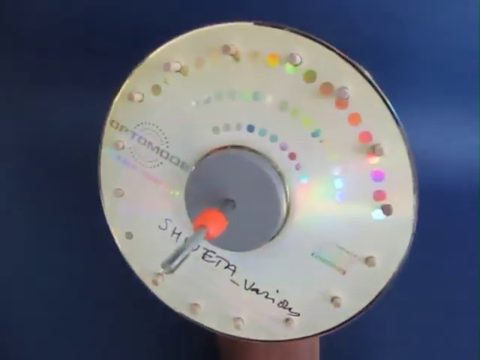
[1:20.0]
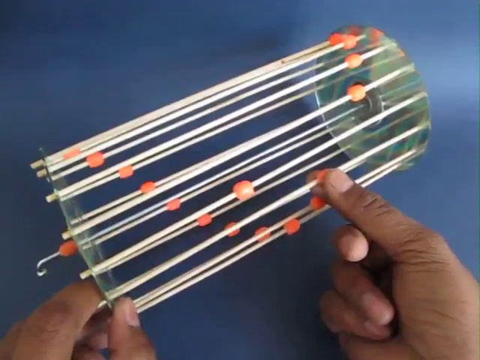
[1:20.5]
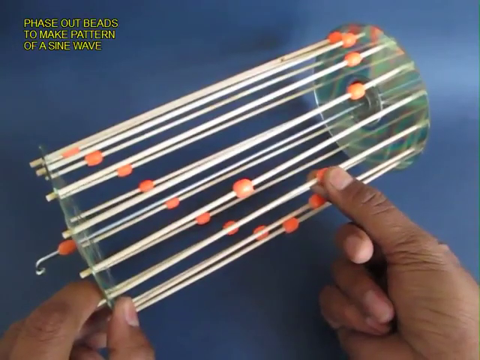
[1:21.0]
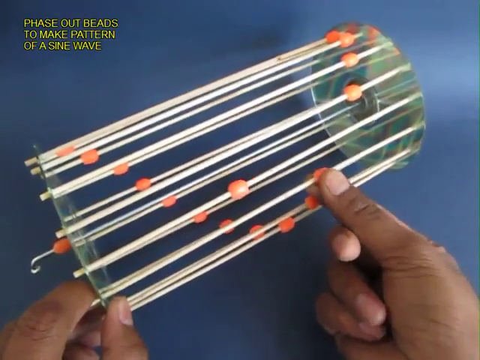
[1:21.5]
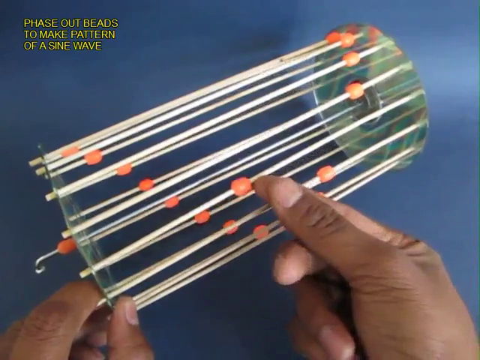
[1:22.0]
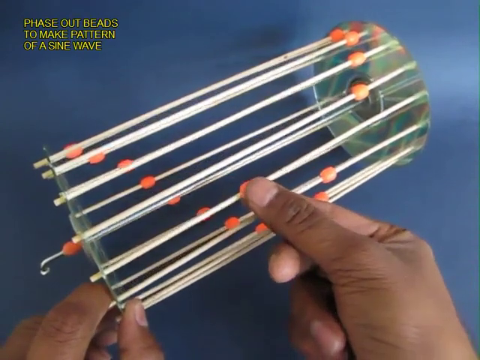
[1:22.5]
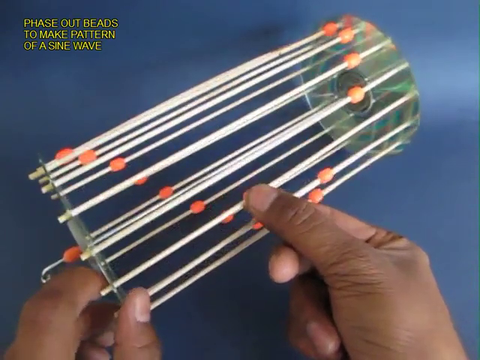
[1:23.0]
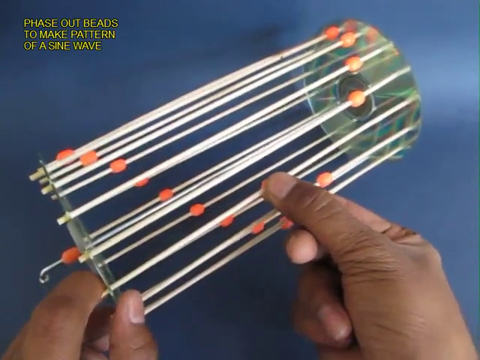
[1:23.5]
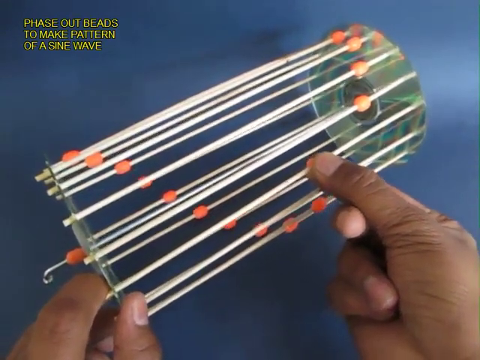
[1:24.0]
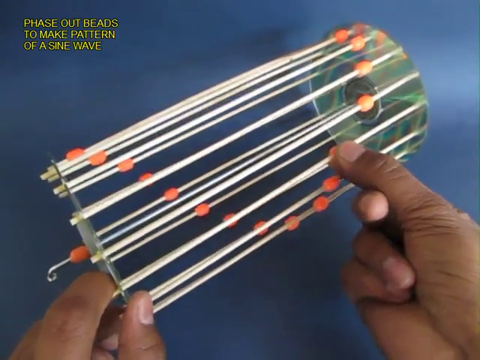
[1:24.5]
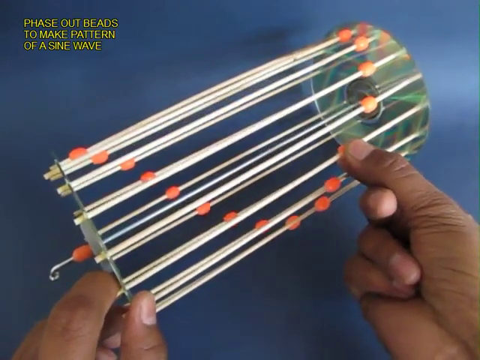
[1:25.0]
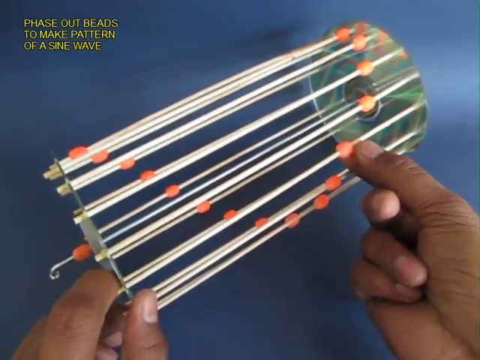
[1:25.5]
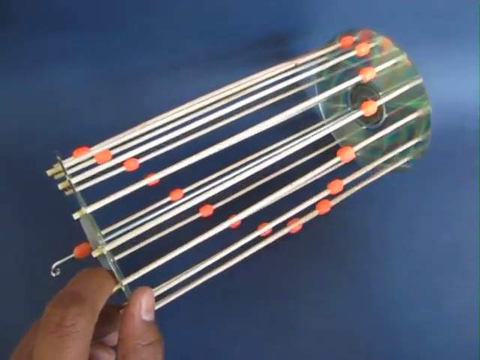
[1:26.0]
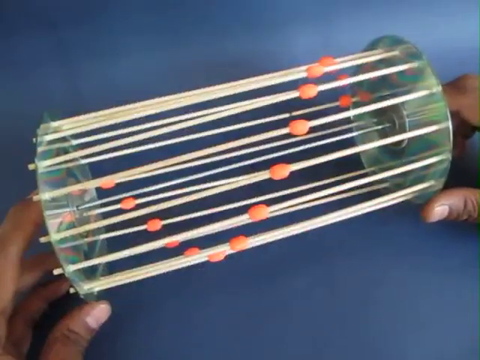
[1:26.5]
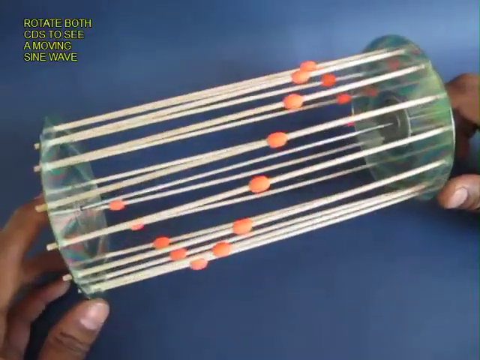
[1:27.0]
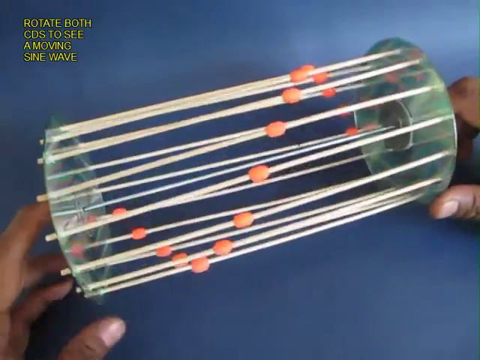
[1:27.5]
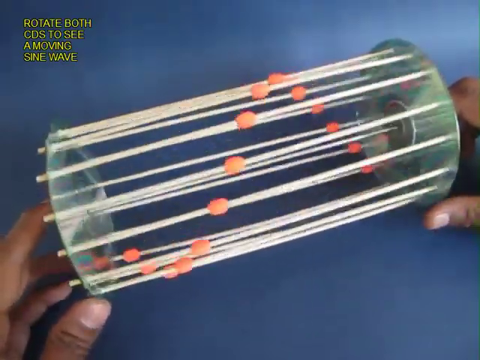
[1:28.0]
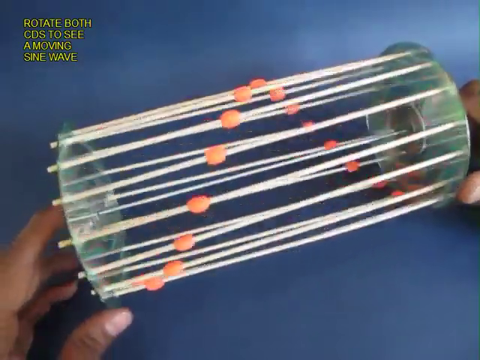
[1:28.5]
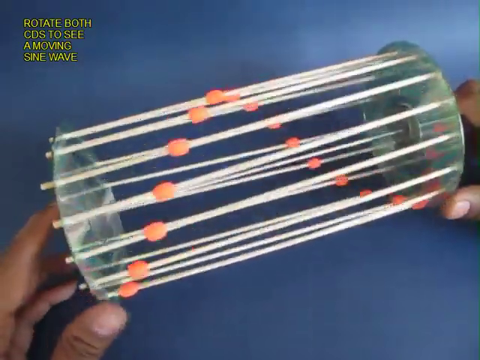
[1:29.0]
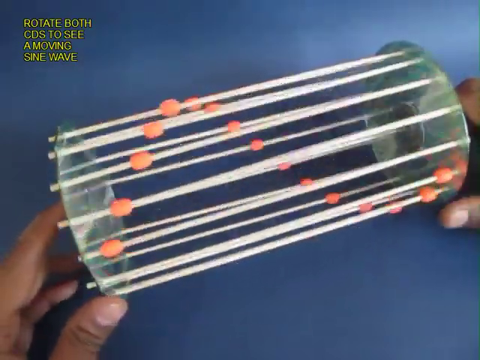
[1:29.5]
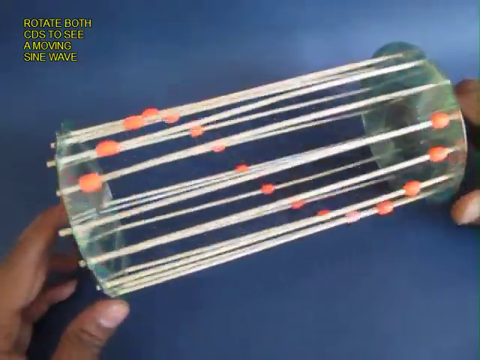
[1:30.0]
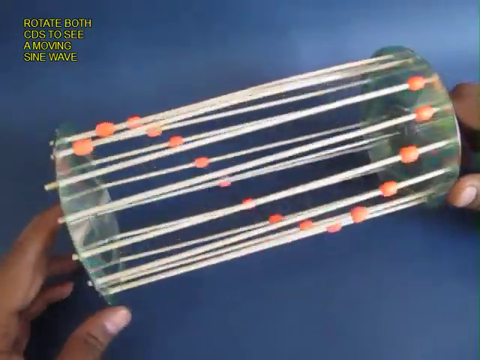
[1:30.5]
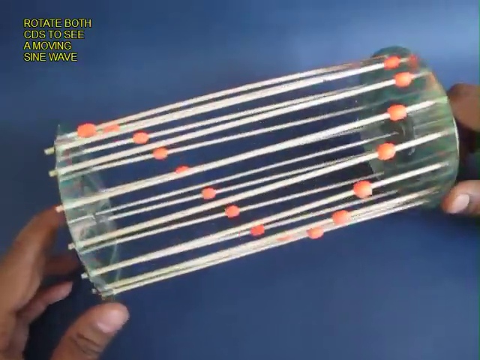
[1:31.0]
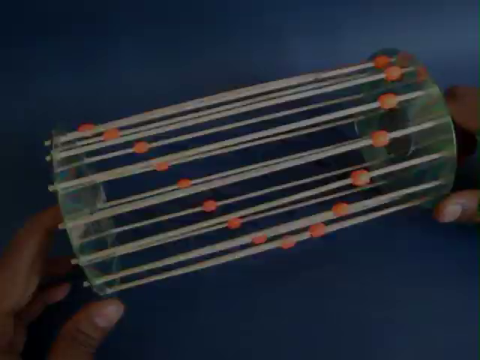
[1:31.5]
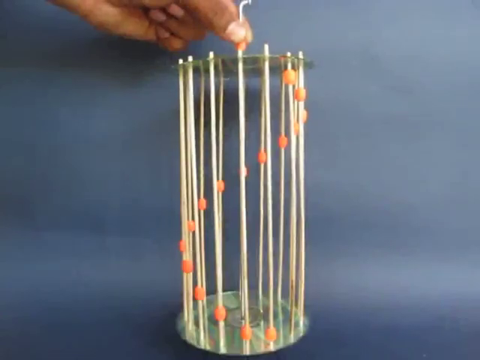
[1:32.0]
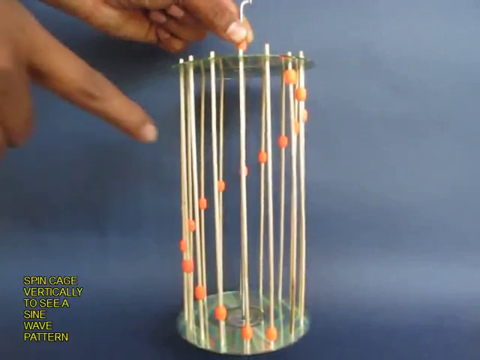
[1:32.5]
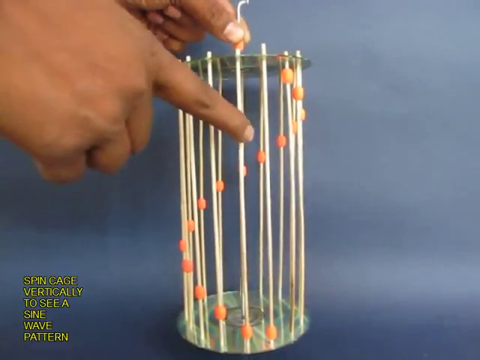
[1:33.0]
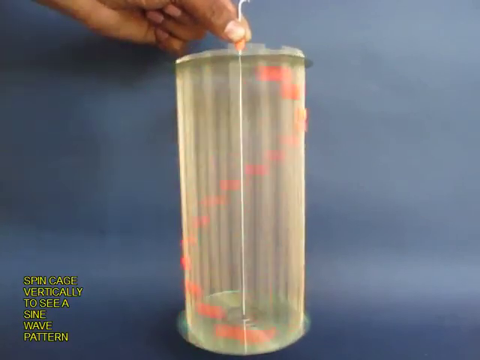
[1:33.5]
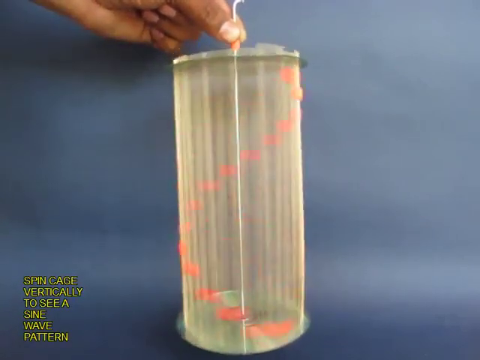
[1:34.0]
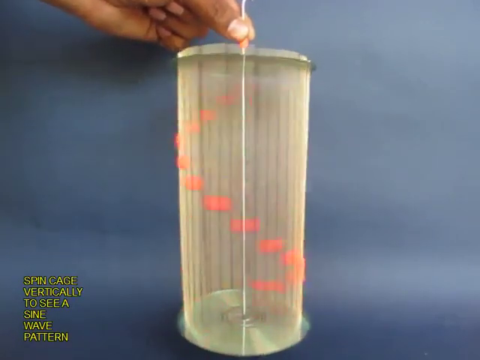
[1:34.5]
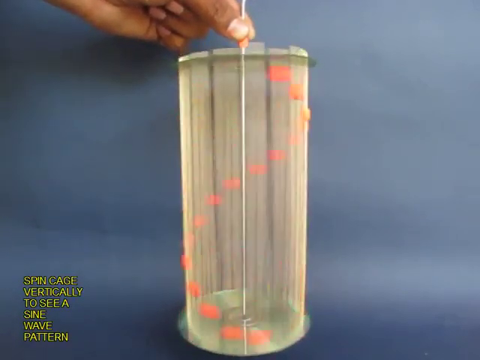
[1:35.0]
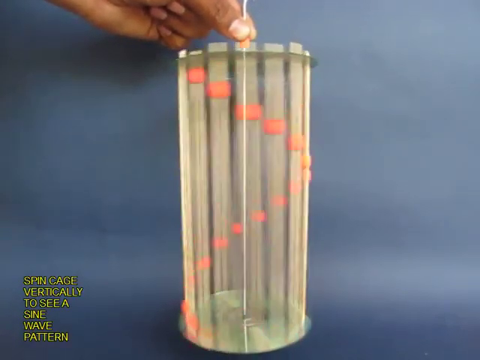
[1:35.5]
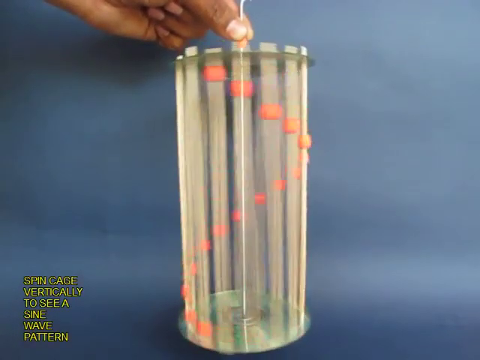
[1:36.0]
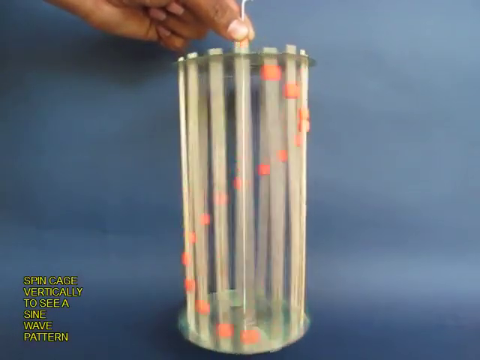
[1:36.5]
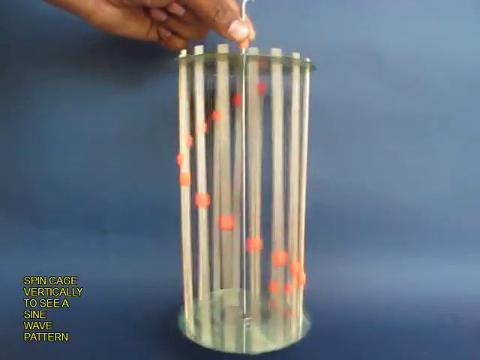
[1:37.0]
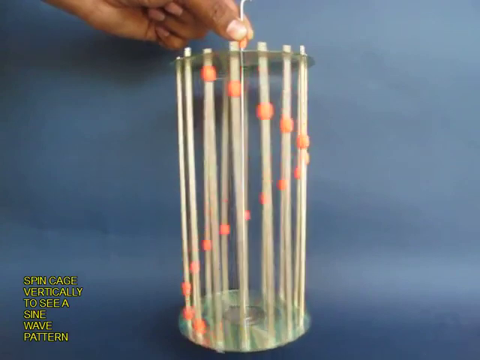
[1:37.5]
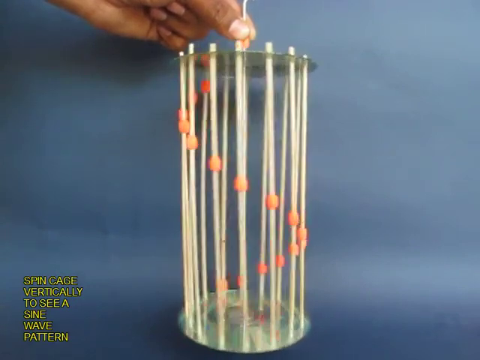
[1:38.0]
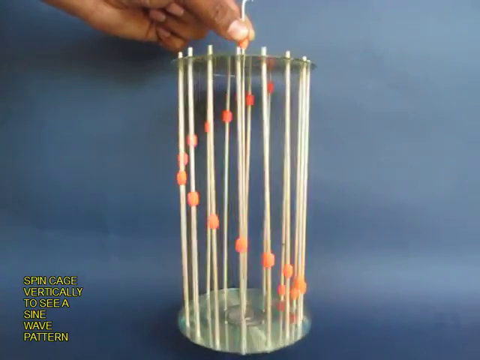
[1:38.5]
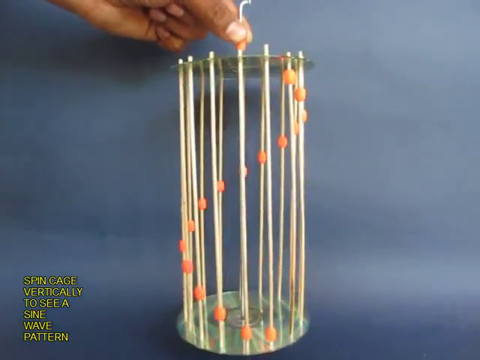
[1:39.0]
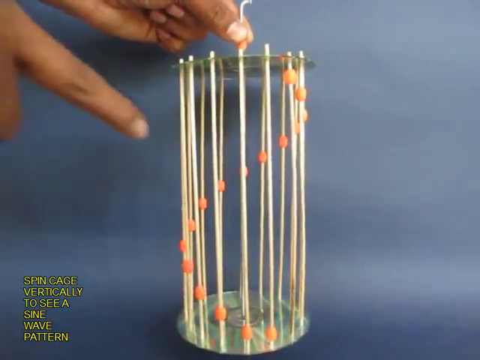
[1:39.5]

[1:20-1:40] One of the CDs is in view, showing its holes, the bottoms of the skewers, a silver bottle cap, and the end of the metal rod with an orange bead at the back of it. Black writing on the CD says "SHETA"; the CD has many different colorful spots, and the CD's branding is also visible. The teacher's hand moves the beads, sliding them up and down the skewers until they form a neat pattern with the other beads. He rotates the tube with his hand to show everything together and how it is supposed to look. He then turns it vertically, holds the metal rod, and starts to spin it.